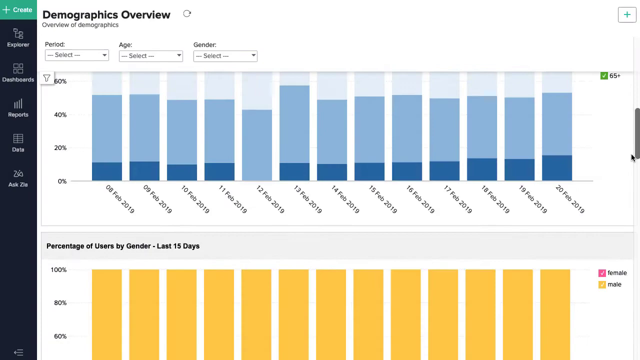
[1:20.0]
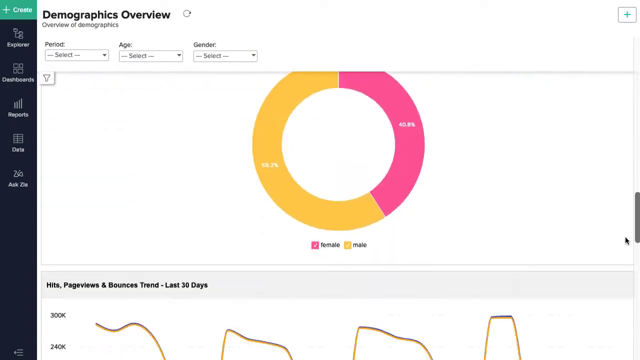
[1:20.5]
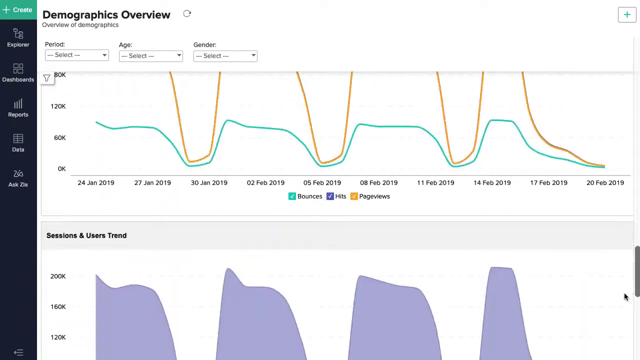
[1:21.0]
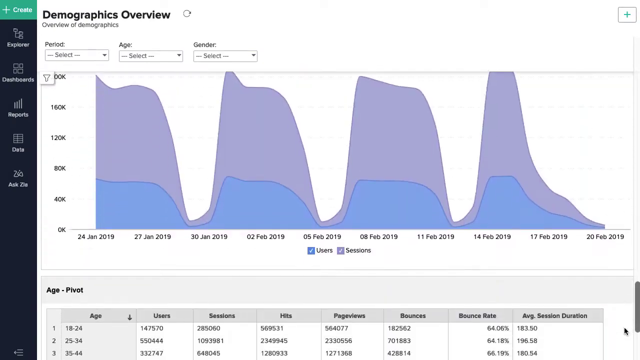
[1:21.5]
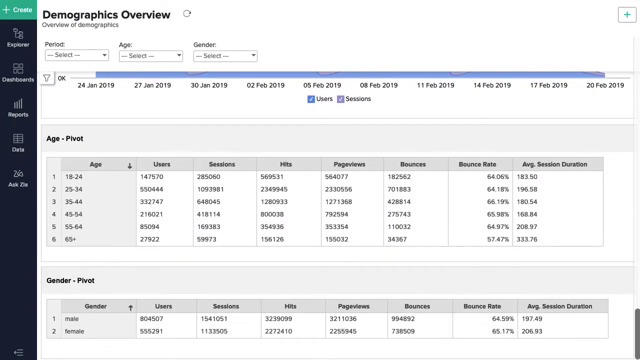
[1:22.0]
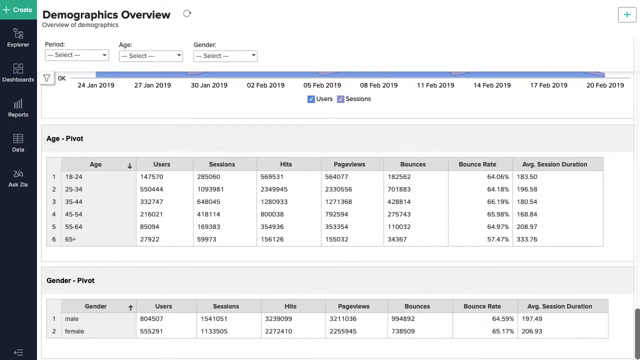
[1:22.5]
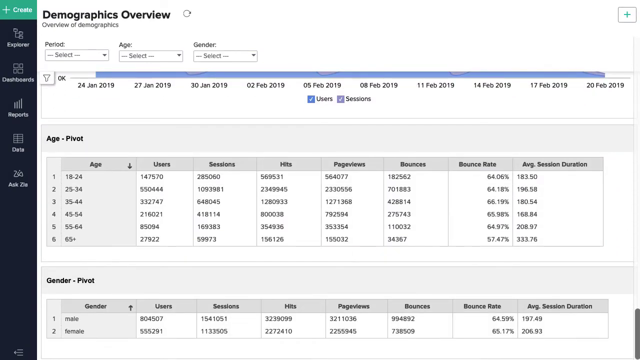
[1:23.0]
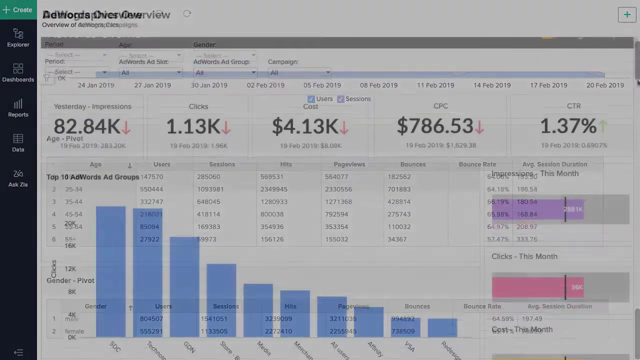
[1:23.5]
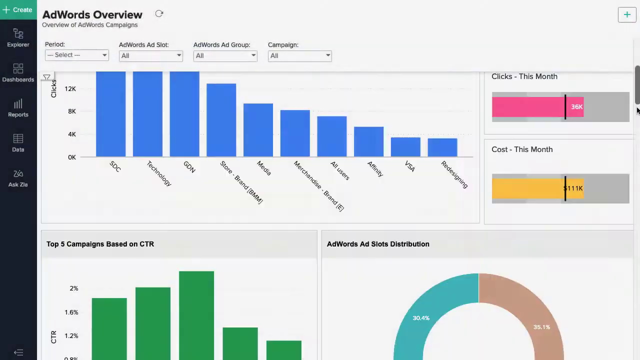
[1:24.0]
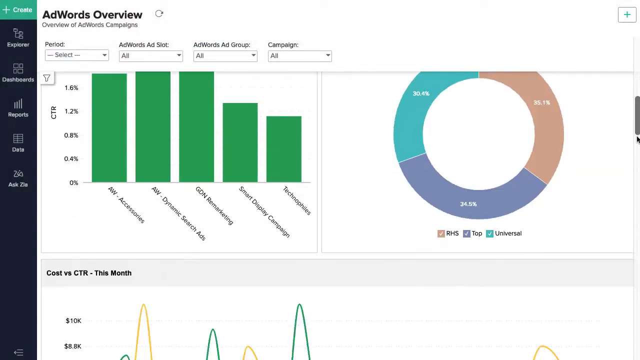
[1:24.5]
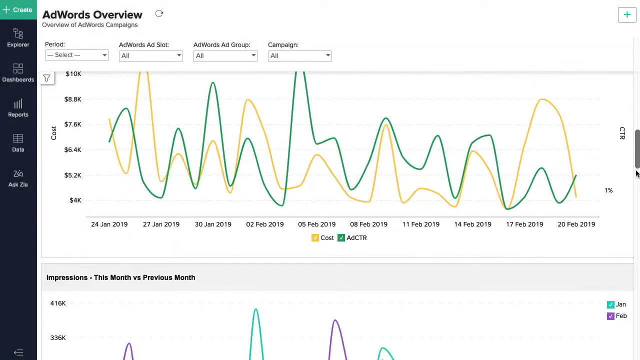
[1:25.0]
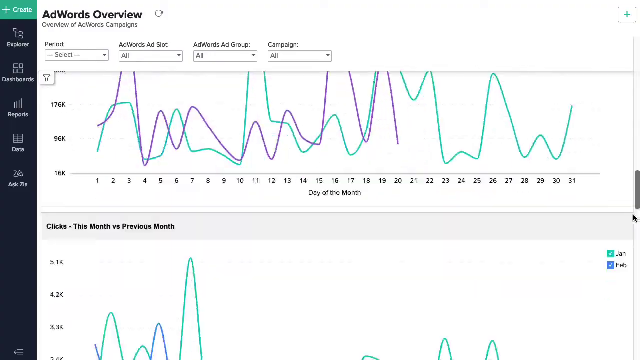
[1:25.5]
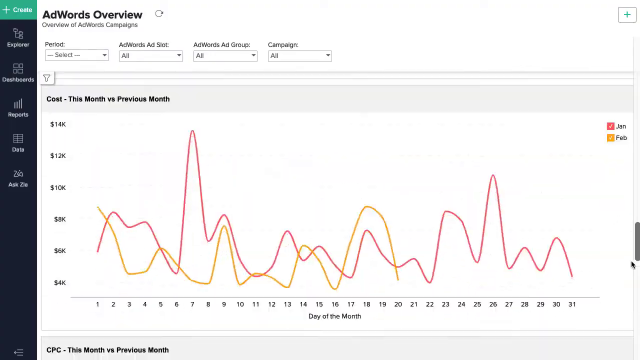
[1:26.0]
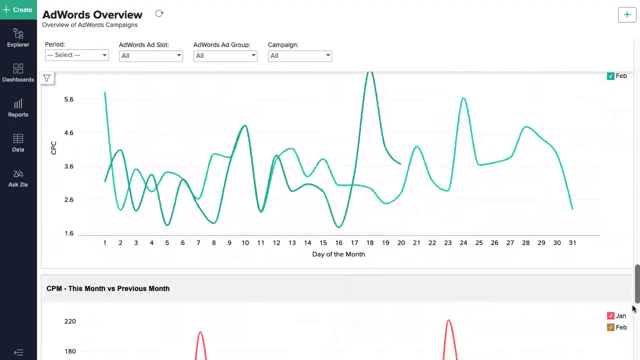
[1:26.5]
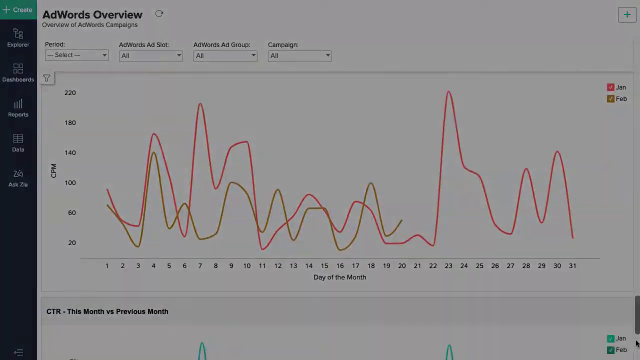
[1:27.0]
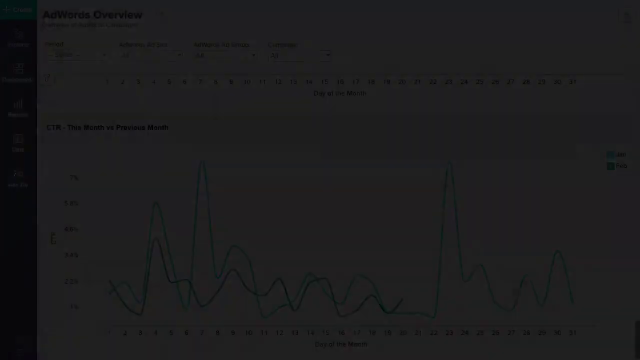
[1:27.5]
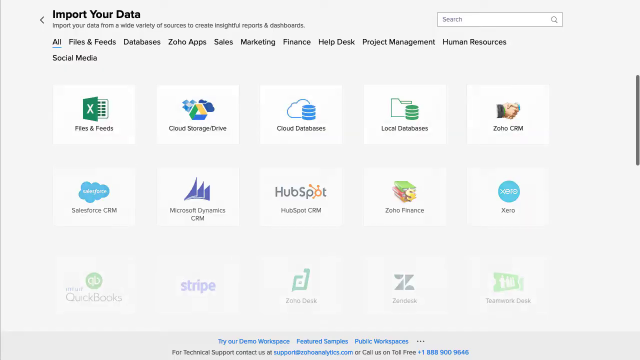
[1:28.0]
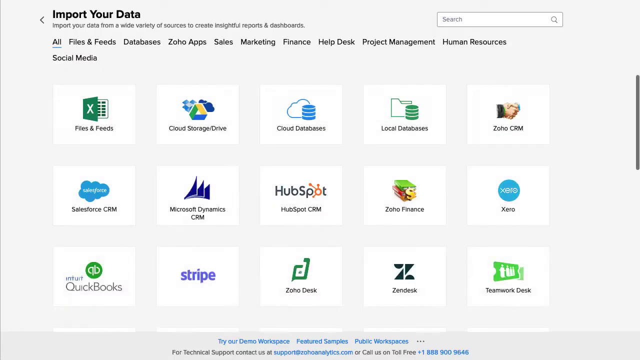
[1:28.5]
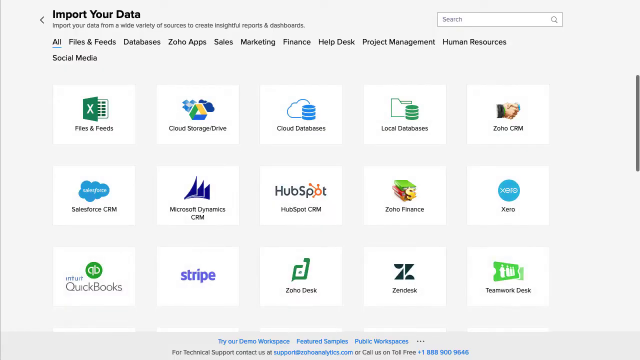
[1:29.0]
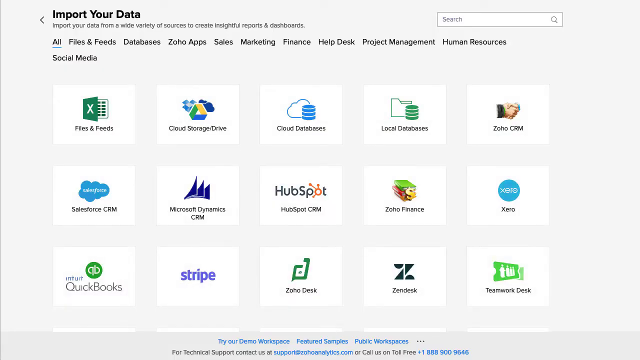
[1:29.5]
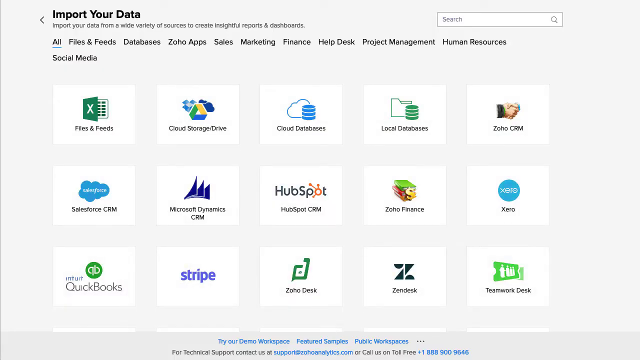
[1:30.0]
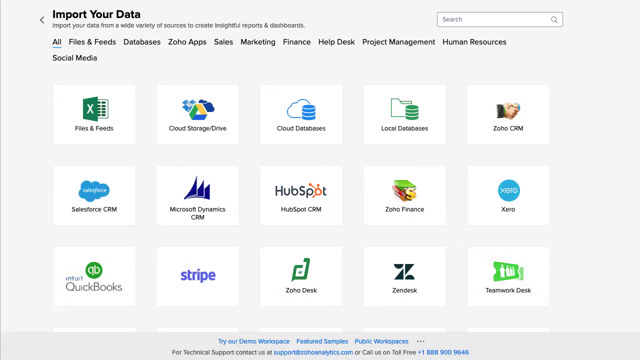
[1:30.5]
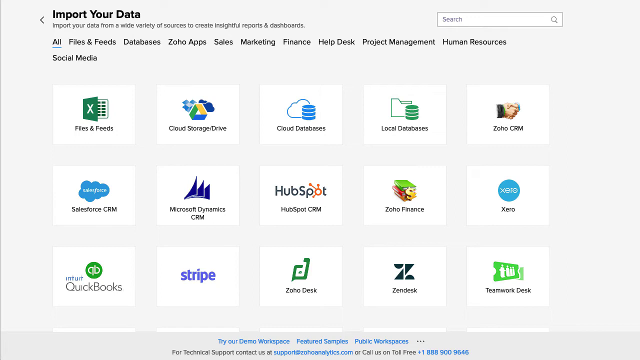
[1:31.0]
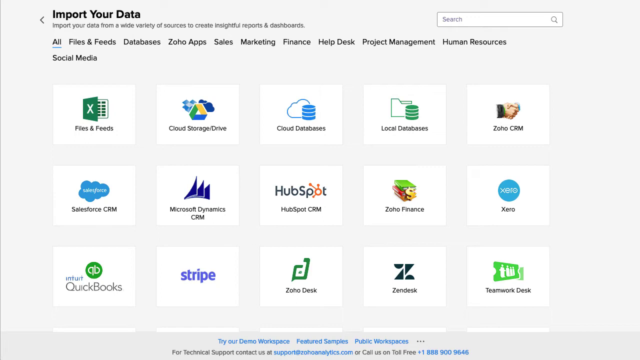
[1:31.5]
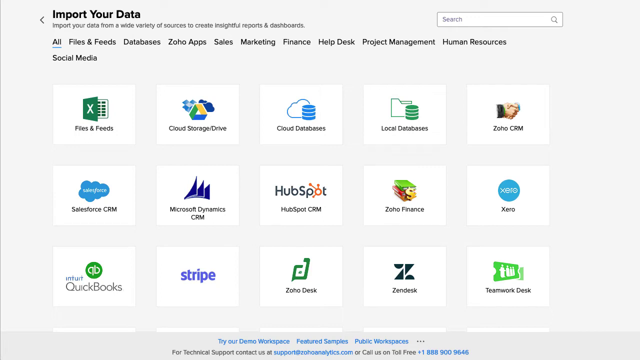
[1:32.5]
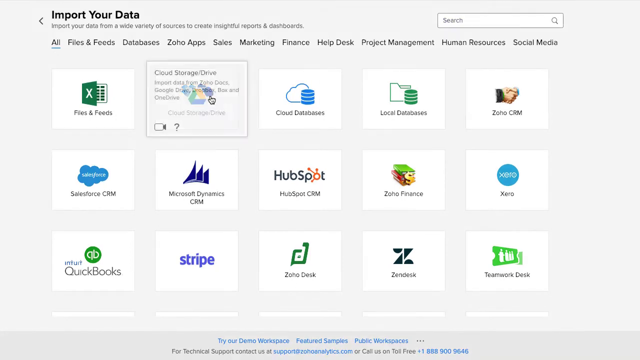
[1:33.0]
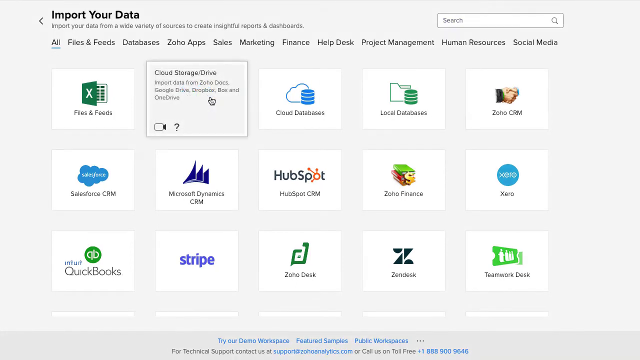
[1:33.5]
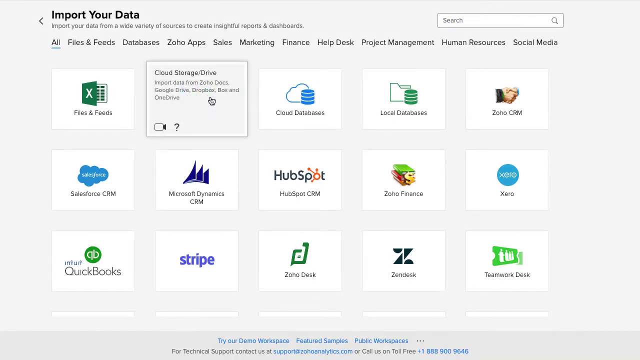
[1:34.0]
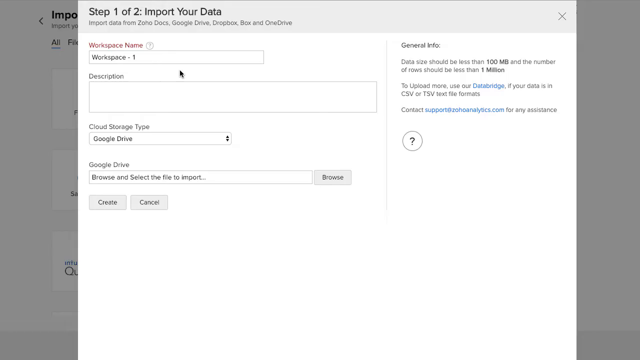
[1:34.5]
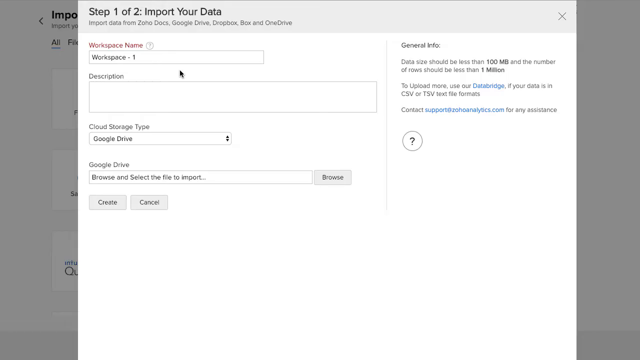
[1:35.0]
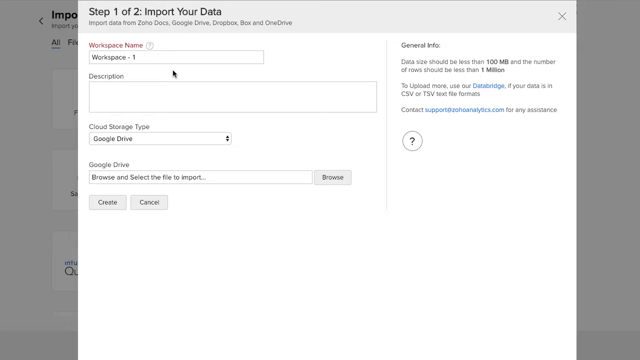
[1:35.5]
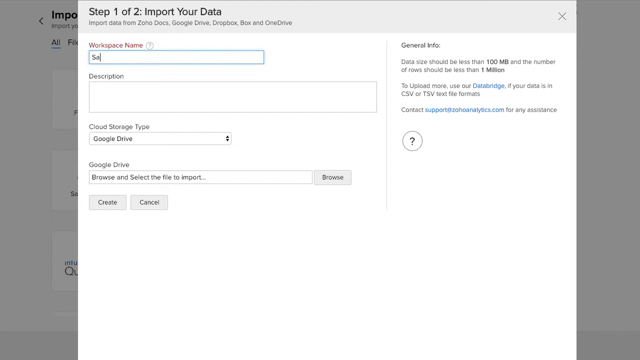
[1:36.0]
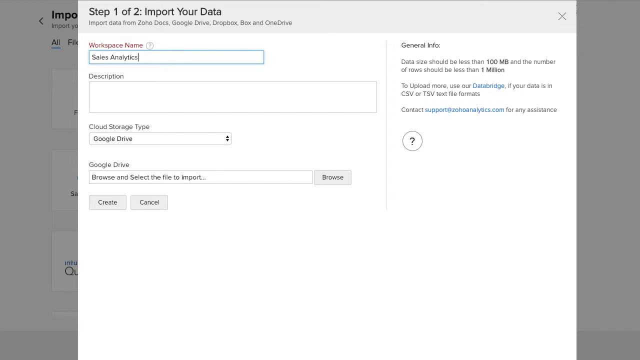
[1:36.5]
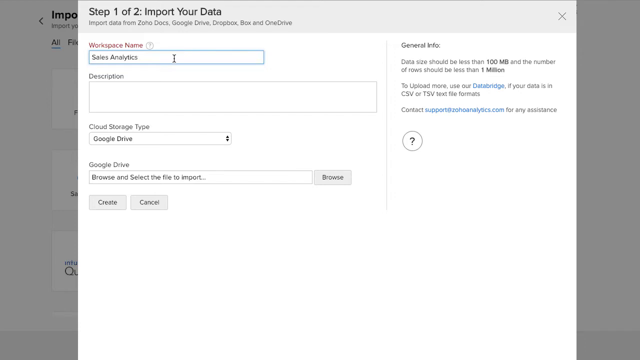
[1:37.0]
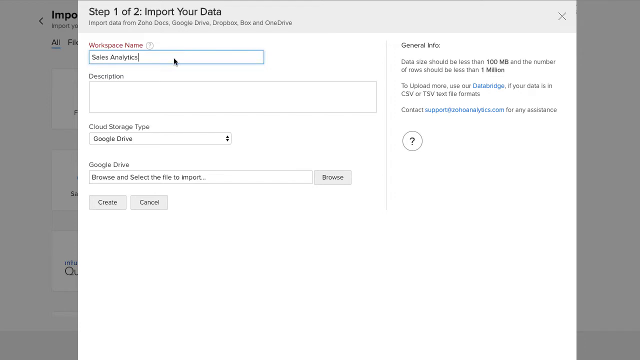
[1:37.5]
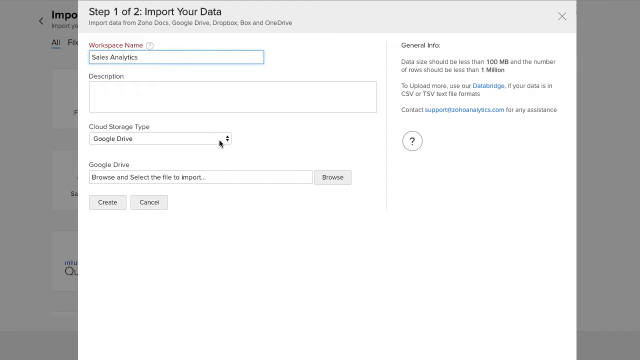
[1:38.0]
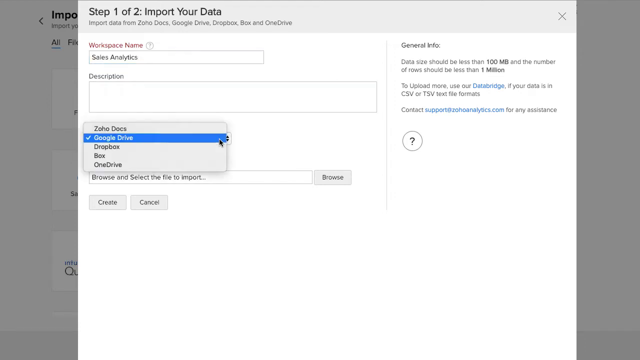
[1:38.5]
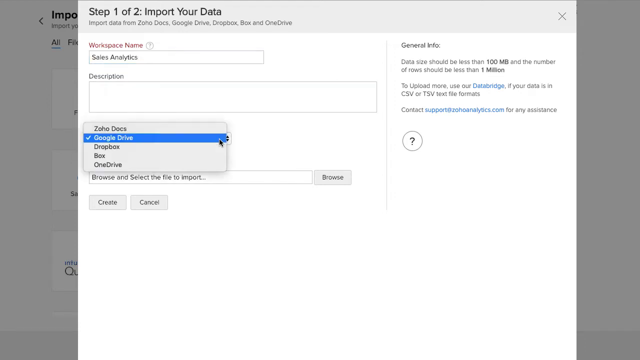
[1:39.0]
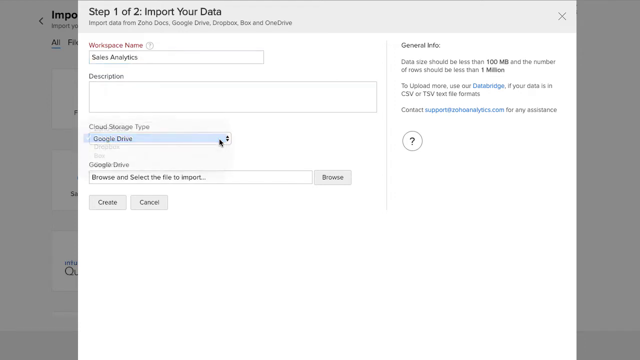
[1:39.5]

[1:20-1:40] A screen with a white background reads "different graphs overview" at the top in black text. The person scrolls quickly through various graphs, mostly bar graphs in various colors, along with other types such as circle graphs and line graphs. Another screen reads "AdWords overview" at the top, and the person scrolls through more graphs showing costs and expenses. Next, an "import your data" screen shows a grid of apps with their icons, such as Stripe, HubSpot CRM, Zoho Desk, Zendesk and Files and Feeds, with a search bar in the top right corner. Across the top is a list of categories in black text on white, such as sales, marketing, finance, help desk and project management. The person scrolls down and hovers over "cloud storage / drive", and a screen with "import your data" at the top appears, with a workspace tile to do sales analytics. They scroll down and select Google Drive.